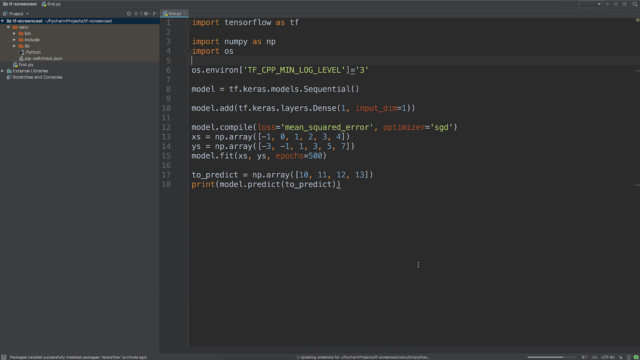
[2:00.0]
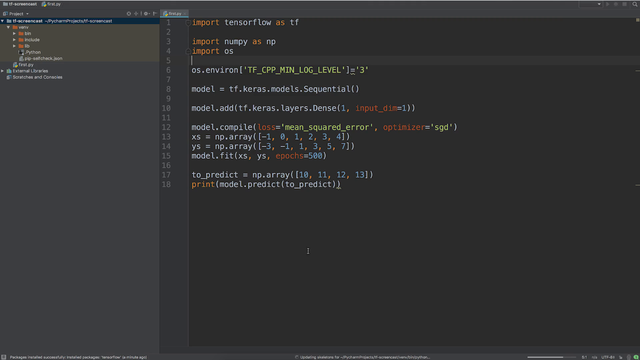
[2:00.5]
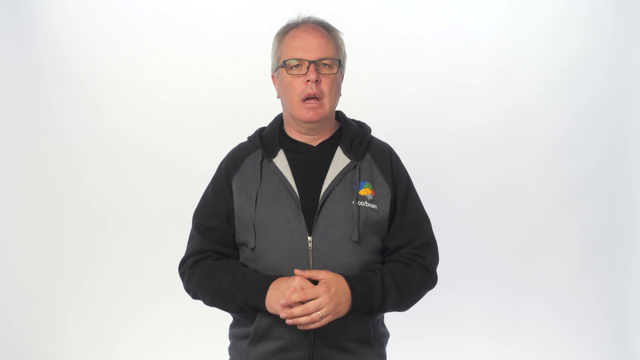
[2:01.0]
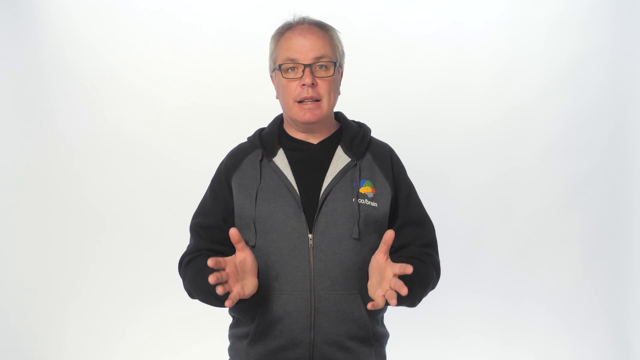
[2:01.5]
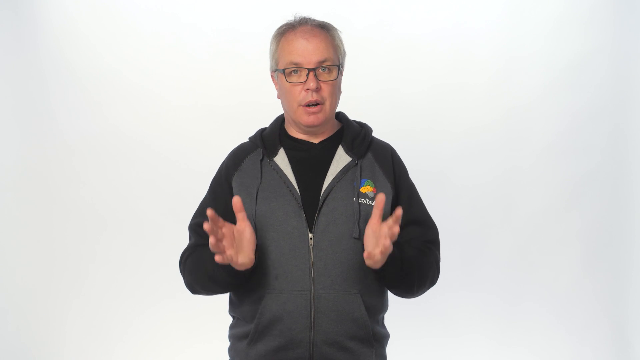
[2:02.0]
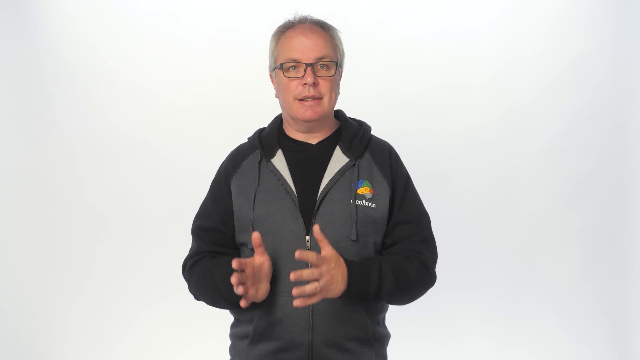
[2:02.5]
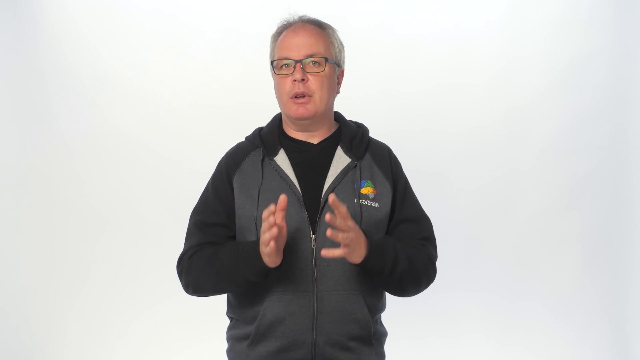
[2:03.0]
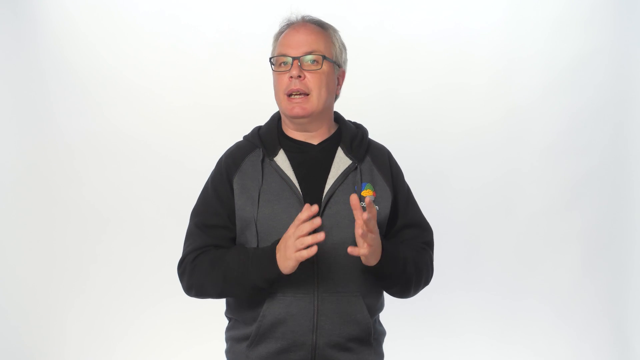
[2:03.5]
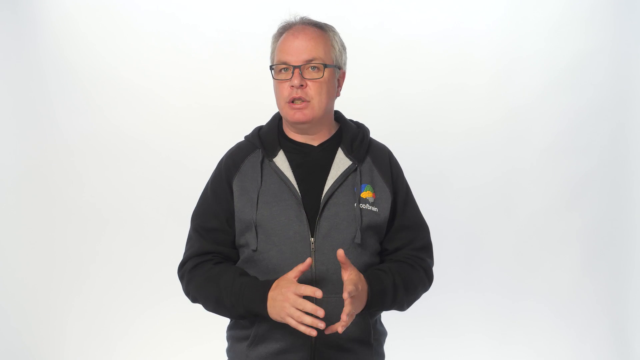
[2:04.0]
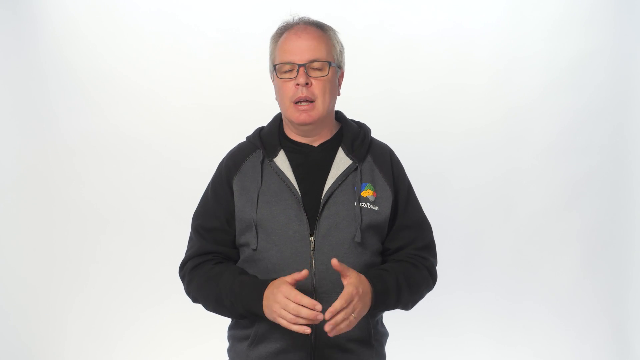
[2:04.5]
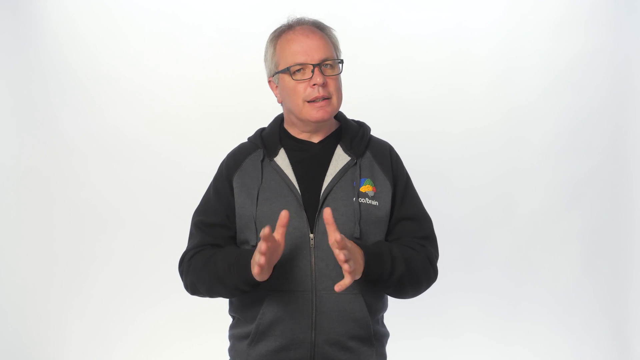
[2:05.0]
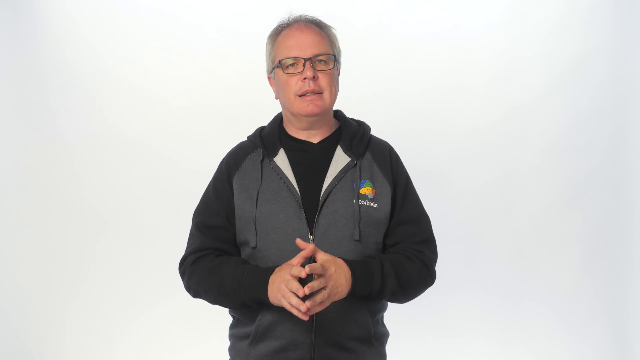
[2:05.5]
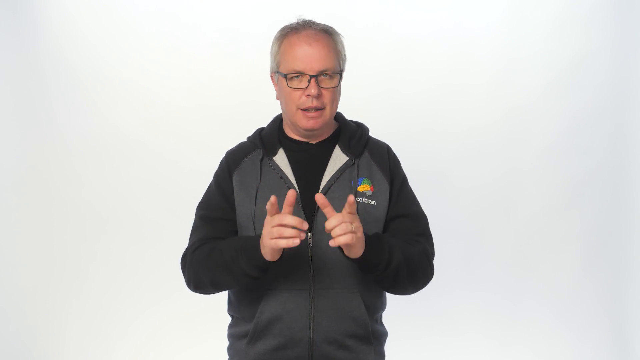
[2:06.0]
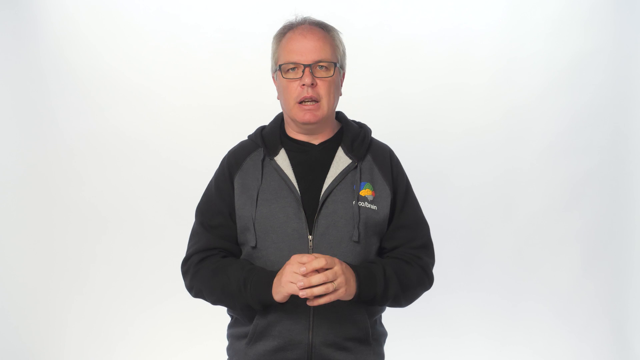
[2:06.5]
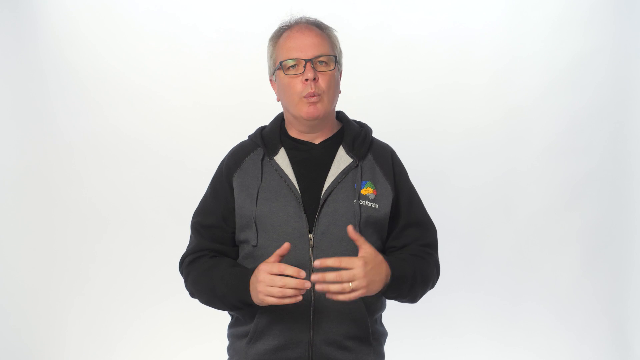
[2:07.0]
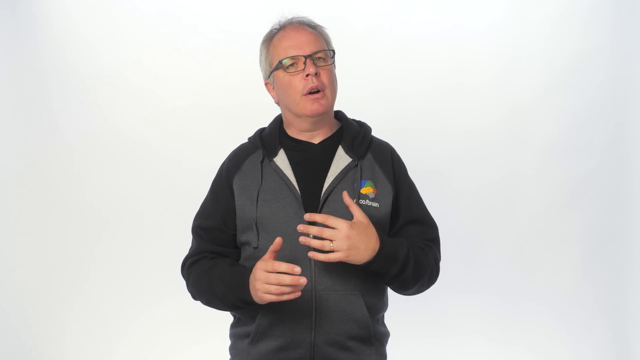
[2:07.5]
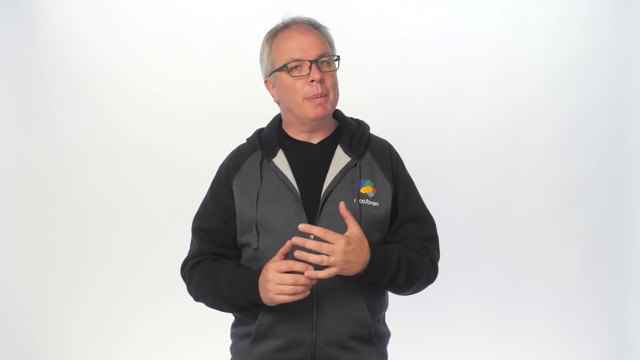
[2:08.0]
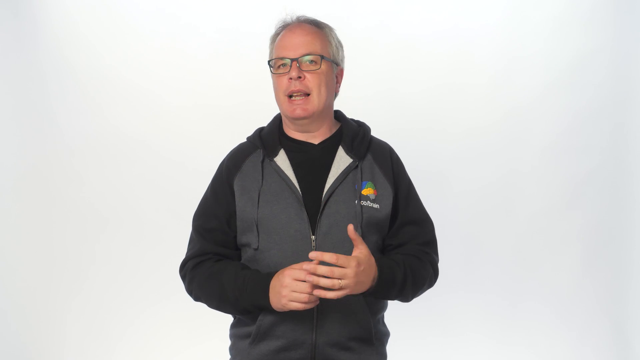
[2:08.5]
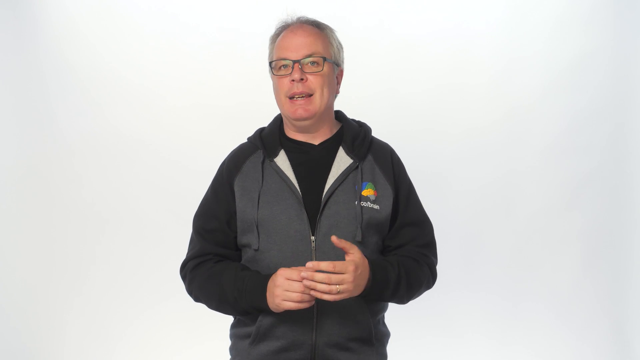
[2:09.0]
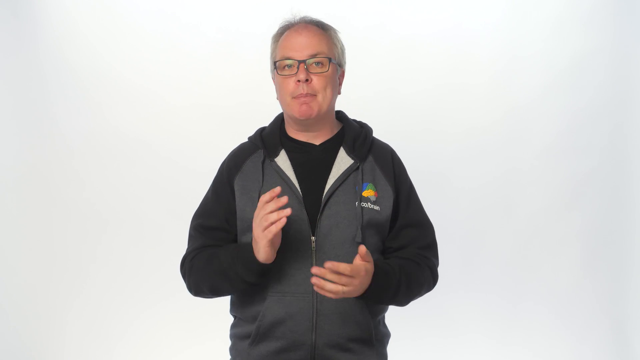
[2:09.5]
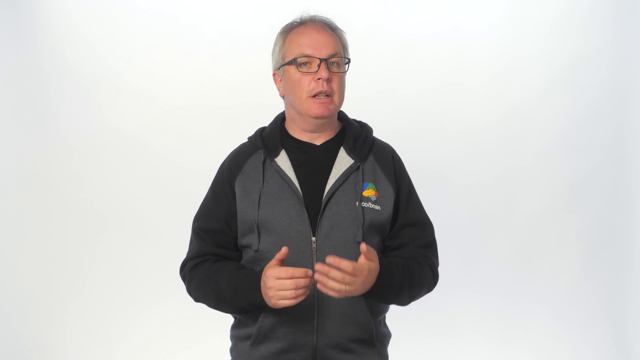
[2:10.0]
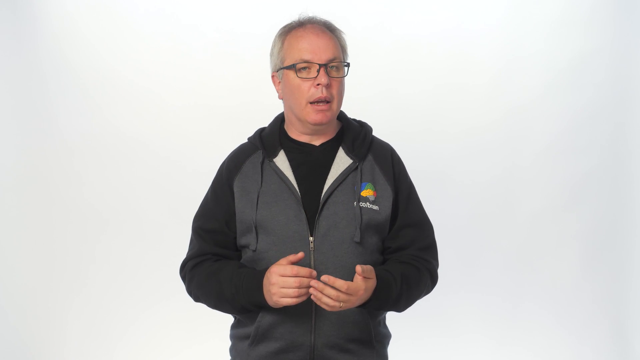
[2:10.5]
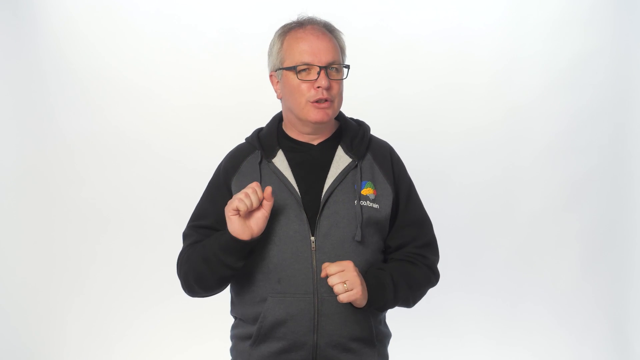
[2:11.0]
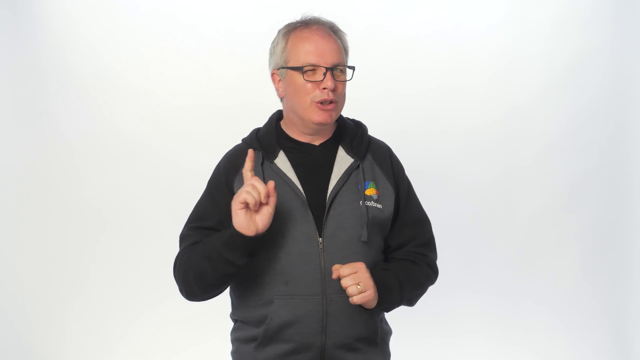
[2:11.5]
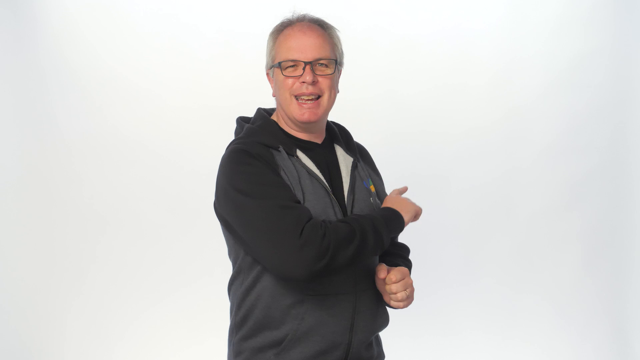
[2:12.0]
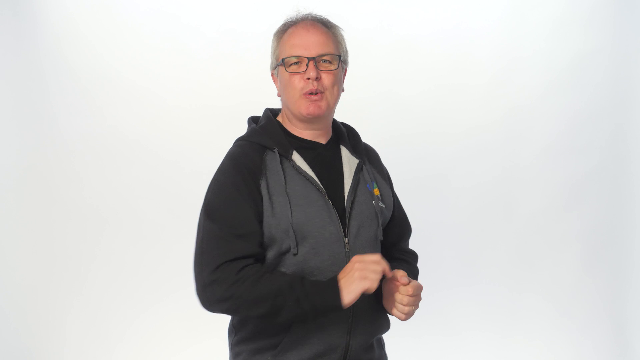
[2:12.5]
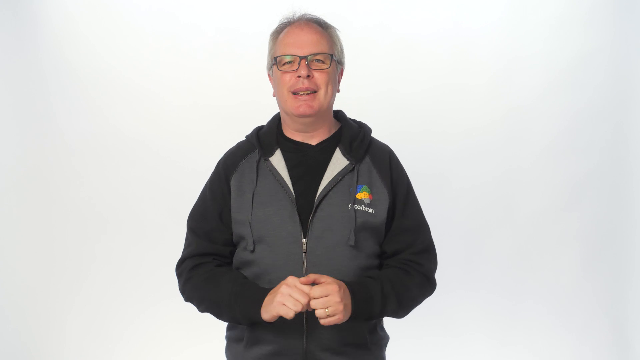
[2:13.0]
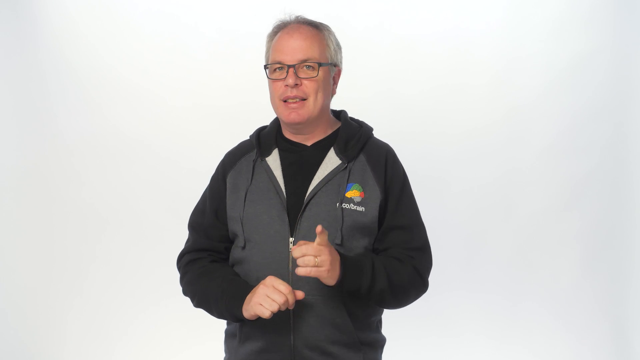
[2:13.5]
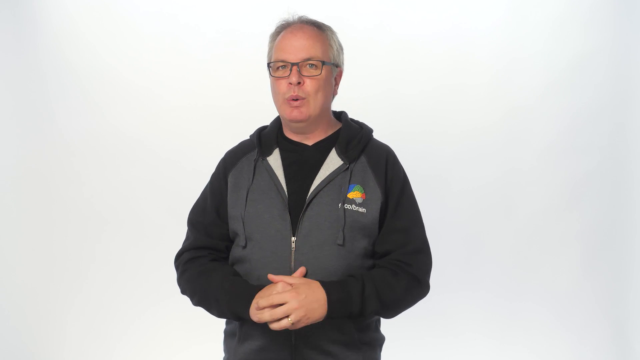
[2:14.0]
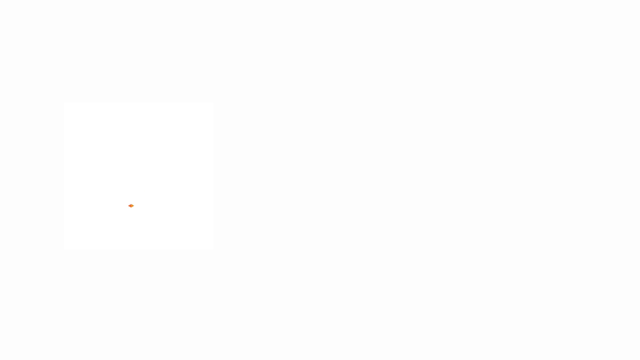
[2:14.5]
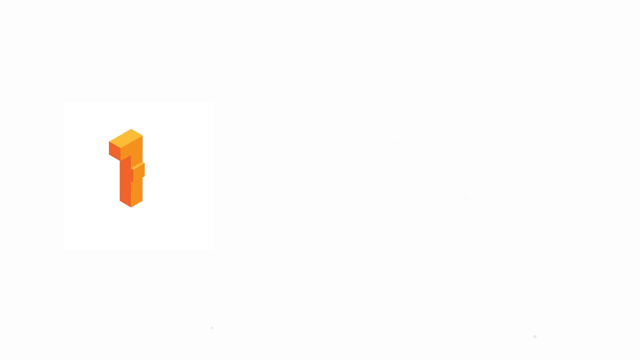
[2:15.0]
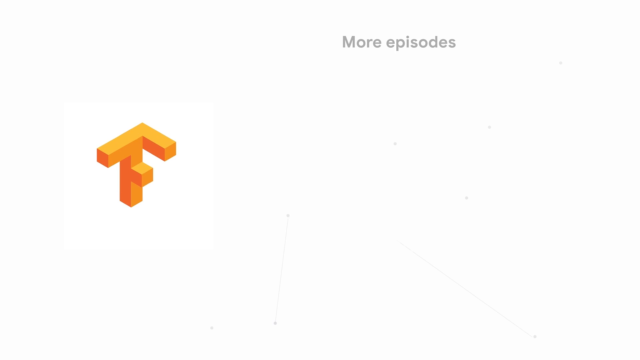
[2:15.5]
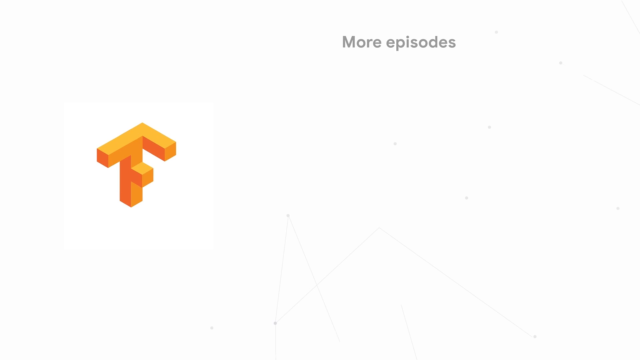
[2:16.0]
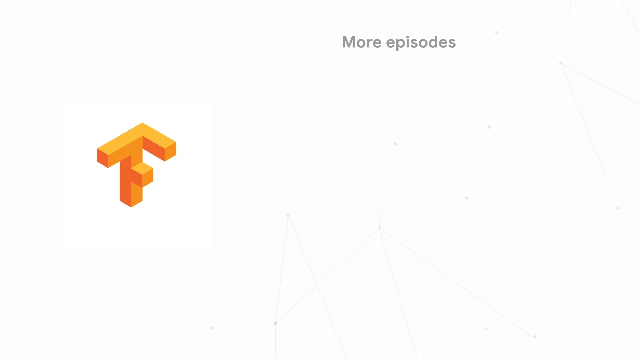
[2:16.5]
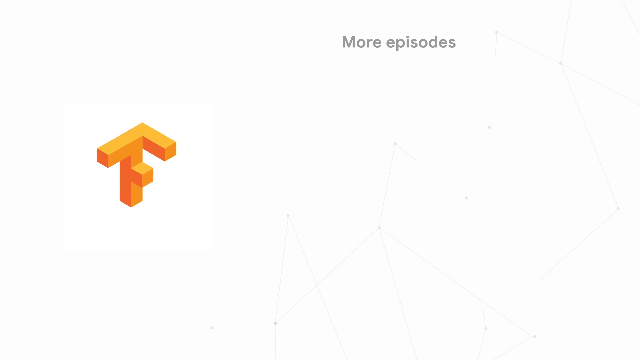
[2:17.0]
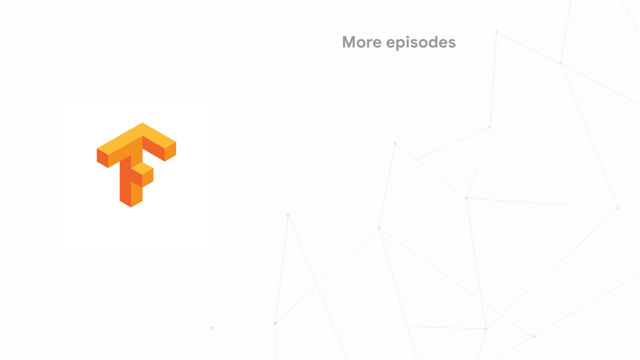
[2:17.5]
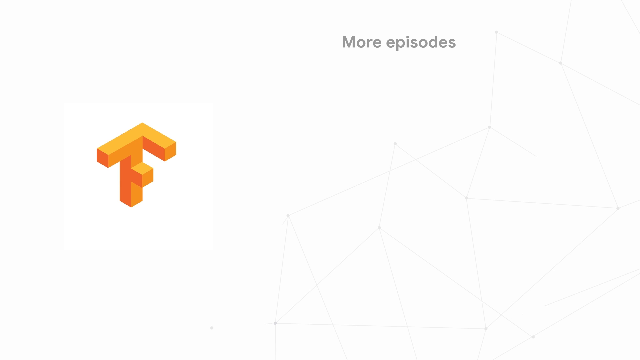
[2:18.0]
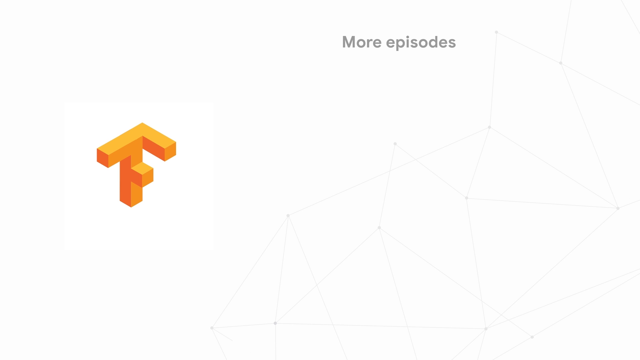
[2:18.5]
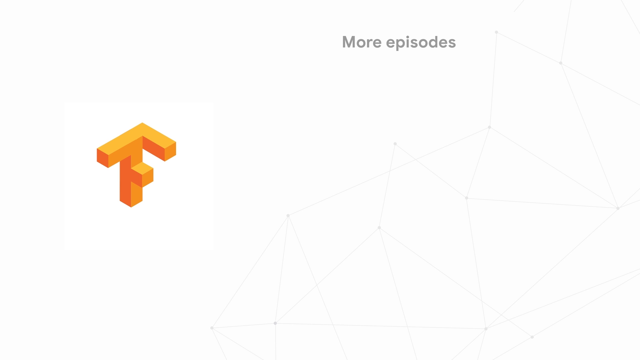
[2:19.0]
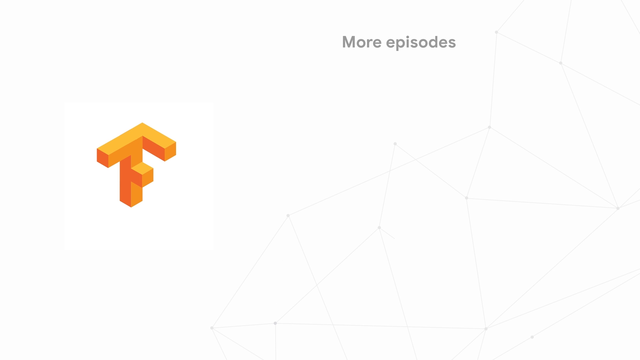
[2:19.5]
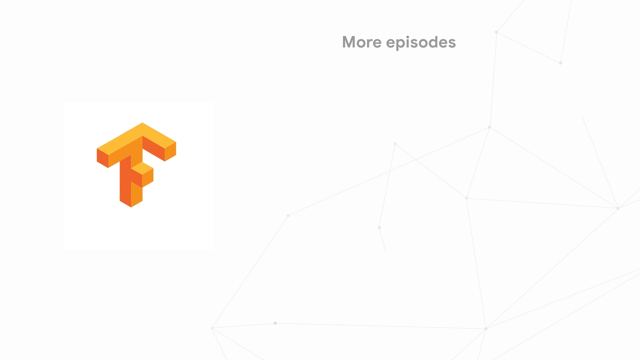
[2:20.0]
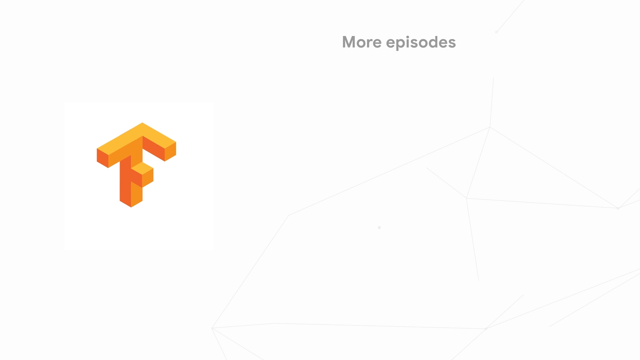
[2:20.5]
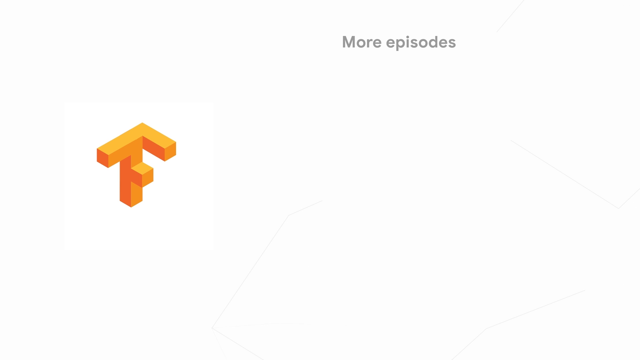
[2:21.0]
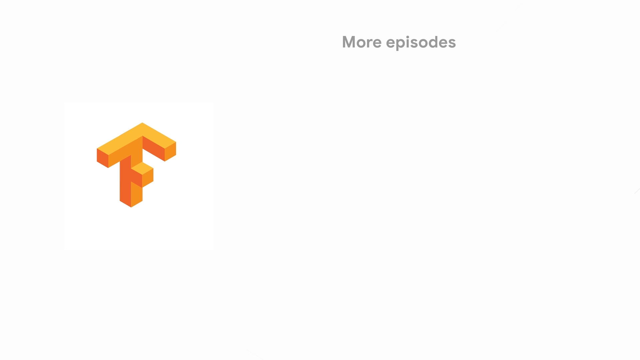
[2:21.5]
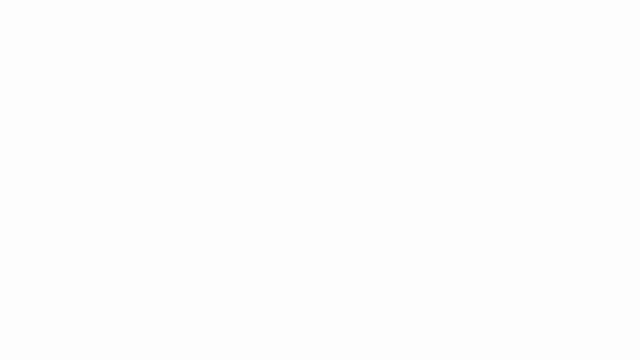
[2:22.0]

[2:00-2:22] The coding is over and the same man appears again, talking with his hands spread out. He is about 55 years old, with gray hair and glasses, wearing a gray sweatshirt with black sleeves over a gray T-shirt, with his company emblem on the left breast of the sweatshirt. His hands move up and down, then come together, then go up and down again; his left hand rises higher, and he moves his hands back and forth. With a big smile, he points at the camera with his right hand and then with his left hand. The company emblem, which looks like a T or an F, pops up on an all-white screen, with "more episodes" written in gray at the top.